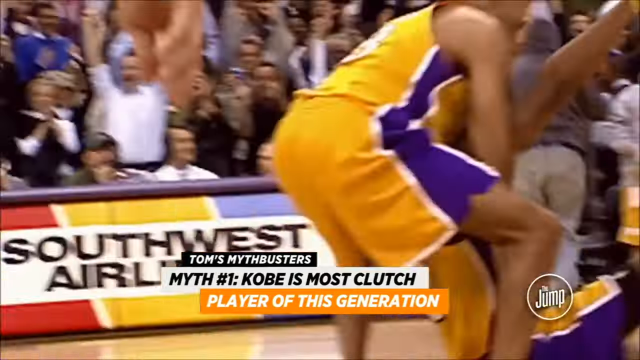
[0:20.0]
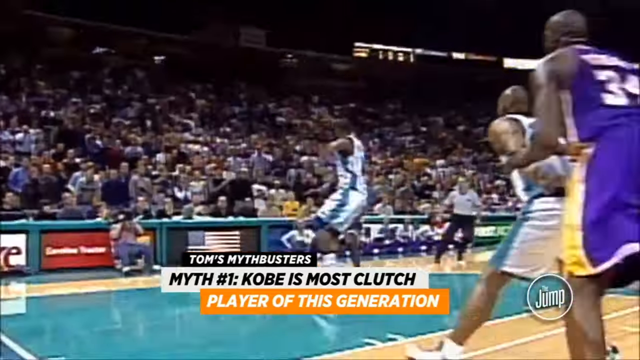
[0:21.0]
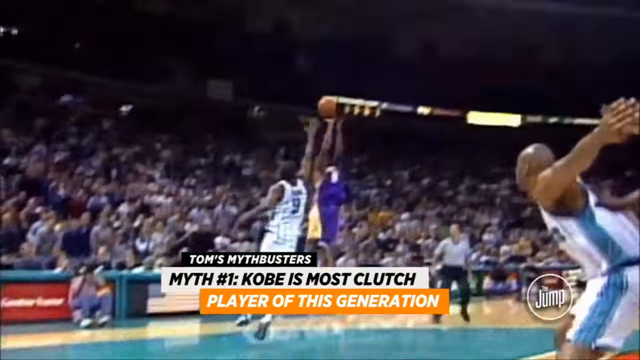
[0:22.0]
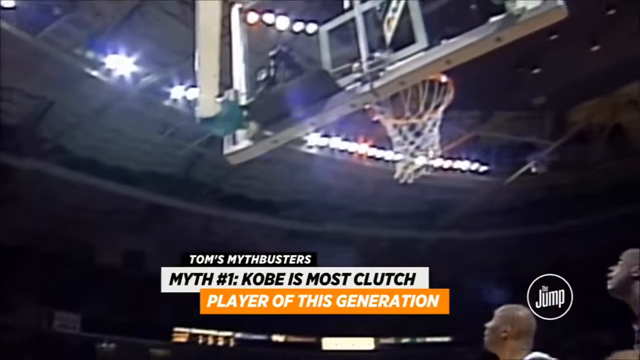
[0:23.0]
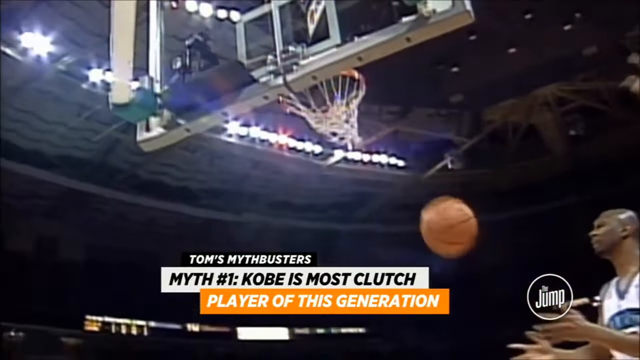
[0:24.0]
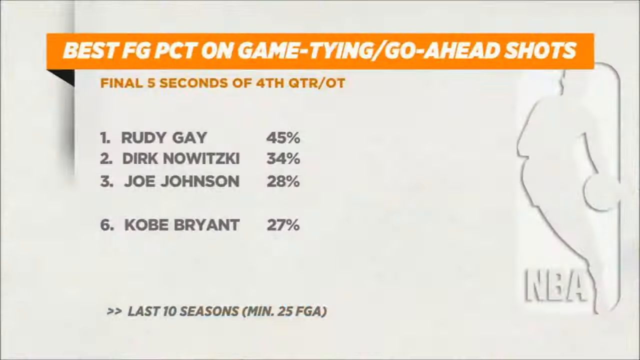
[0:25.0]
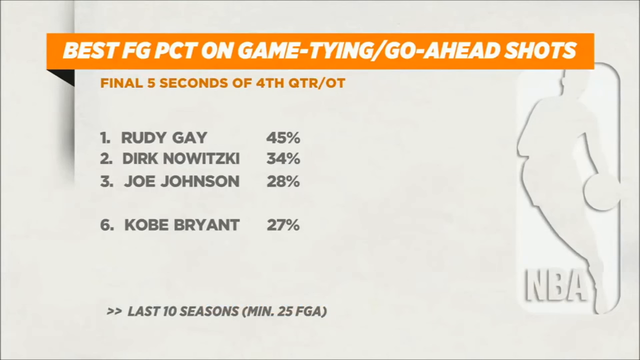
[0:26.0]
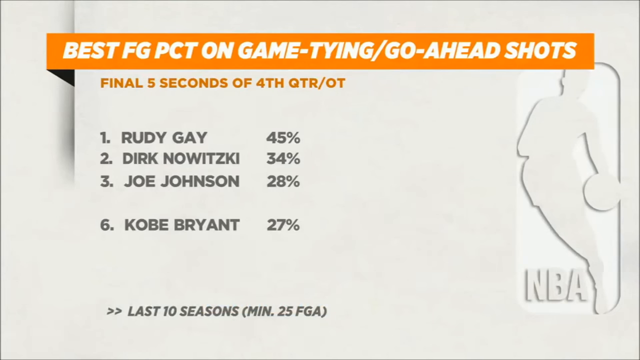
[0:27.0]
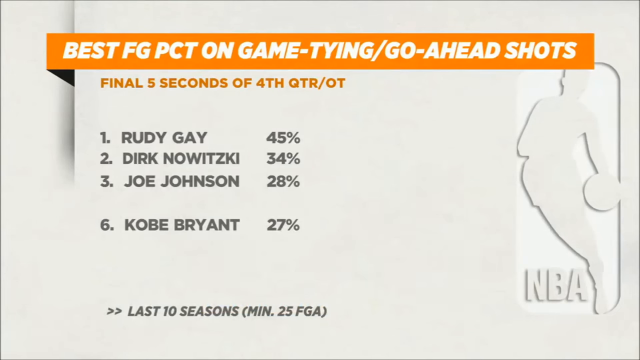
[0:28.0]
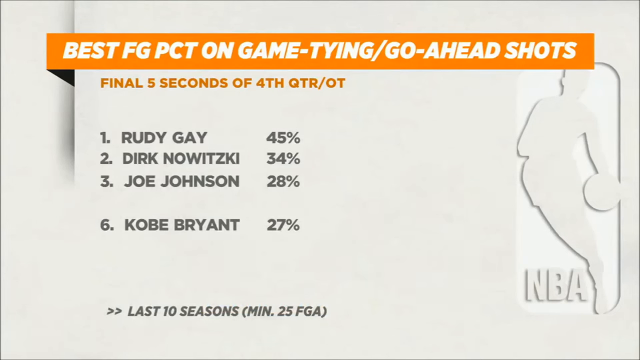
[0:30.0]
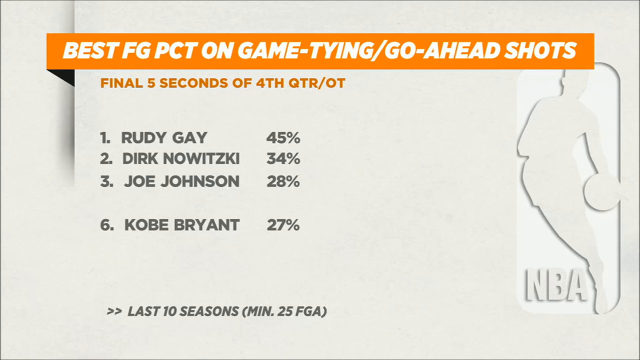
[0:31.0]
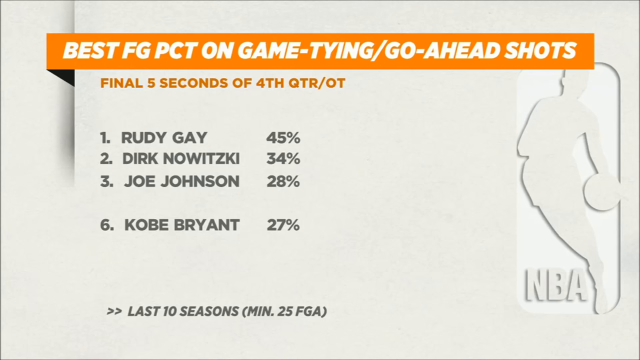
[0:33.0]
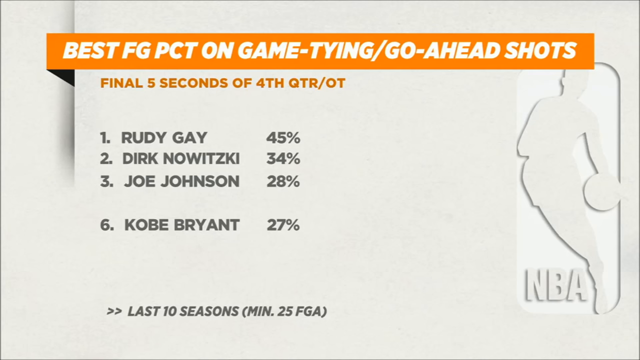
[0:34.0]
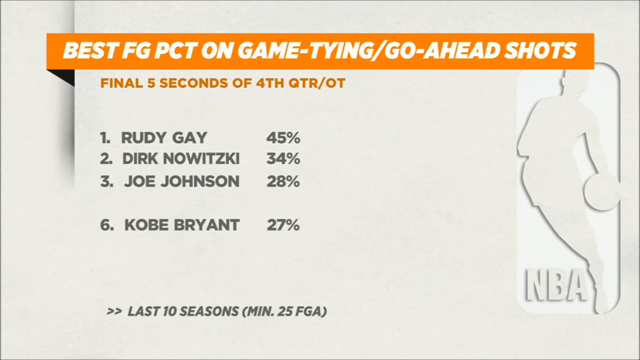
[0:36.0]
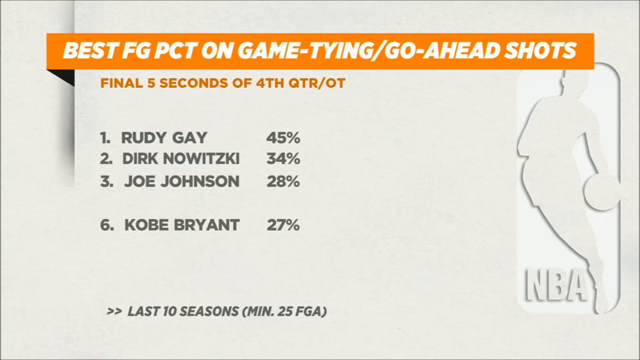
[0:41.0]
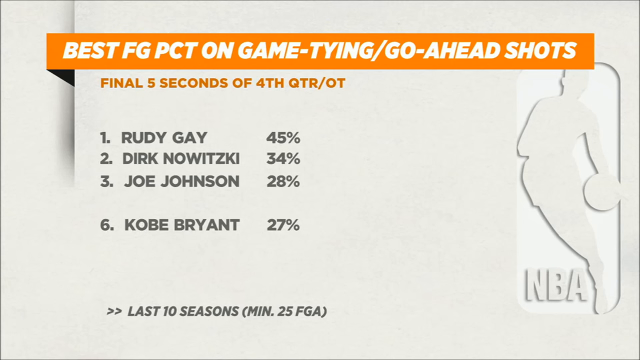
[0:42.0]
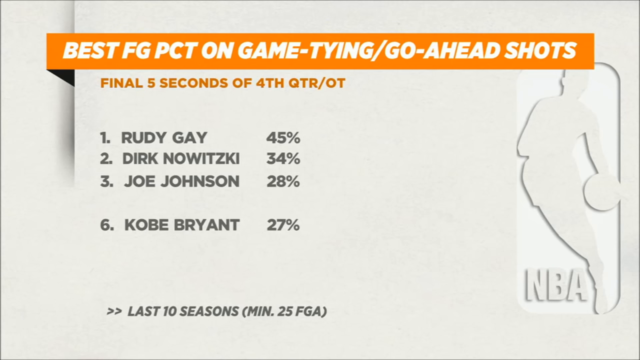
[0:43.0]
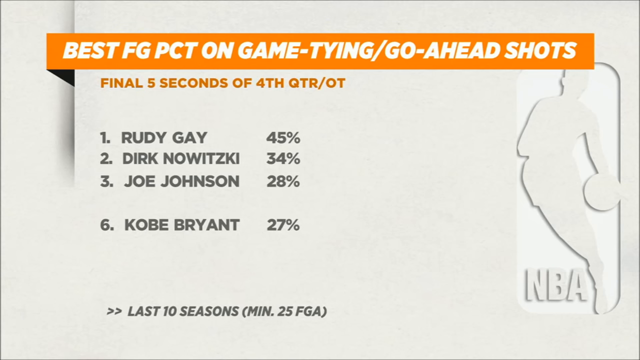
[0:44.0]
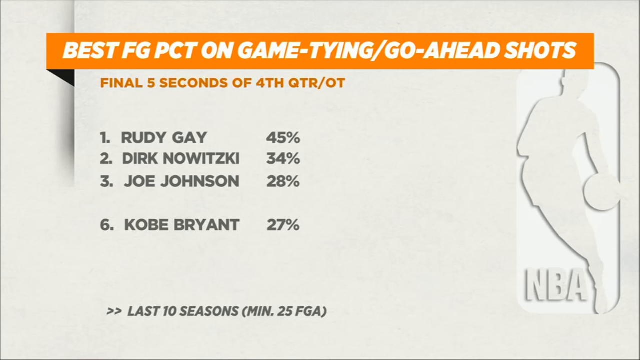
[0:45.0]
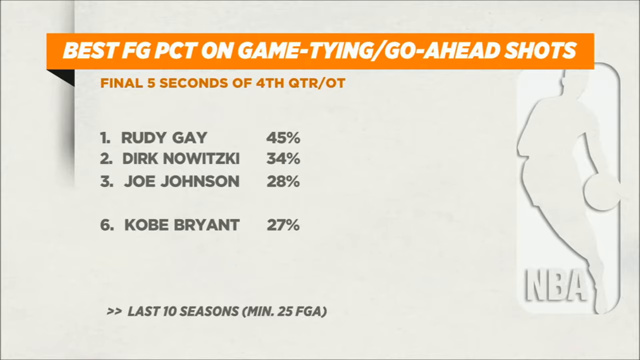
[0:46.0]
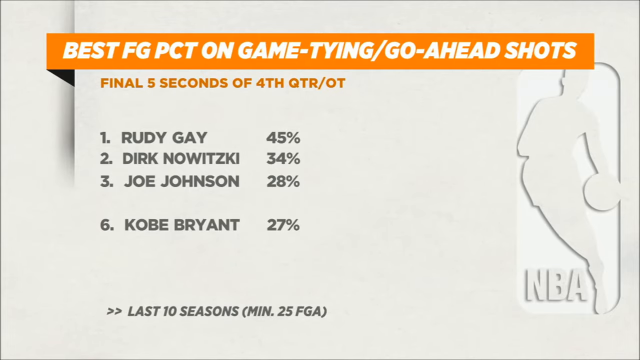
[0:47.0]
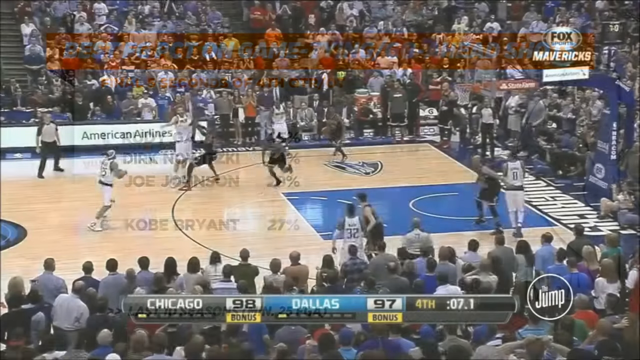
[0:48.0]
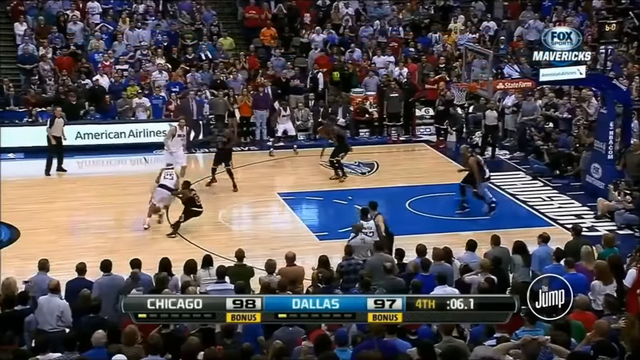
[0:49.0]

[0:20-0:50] He appears to be picking someone up, bent over a little, with the other player between his legs sitting on his butt. Fans celebrate in the stands; a man in the second row with rolled-up white sleeves has his arms up in the air, and people sit in two or three rows. In front of them is a Southwest Airlines ad: a white block with black text and yellow, red and blue vertical stripes. He bear hugs the player and picks him up to celebrate. Kobe then does a fadeaway, jumping back and fading away, and it swishes while number nine on the other team puts a hand up. A shot from what looks like a camera underneath the basket shows the net go up and curve as the ball goes through. Next comes a stat graphic with a white background and a WNBA logo that is not colored in, a silhouette holding the ball in the left hand. An orange banner at the top has white italicized text beginning "best FG percentage on game". The list shows one through three and then six, Kobe Bryant at 27%. At the bottom there is a double arrow and text reading "last 10 seasons with a minimum of 25". The banner on the left side has a black bar or triangle underneath it that makes it look 3D. Then Chicago and Dallas play each other, with Chicago winning 98-97 and six seconds left. Number 25 looks like he is about to dribble in, then passes out to Dirk Nowitzki, who goes up and takes a shot at the three-point line.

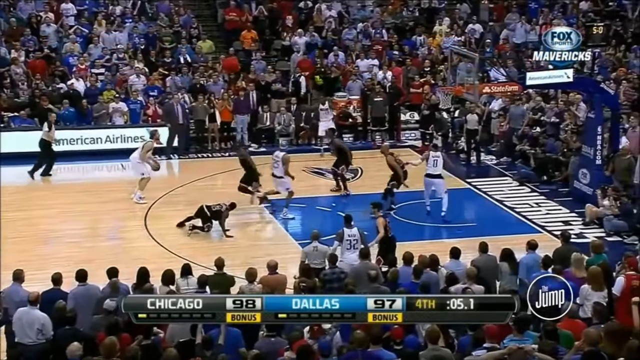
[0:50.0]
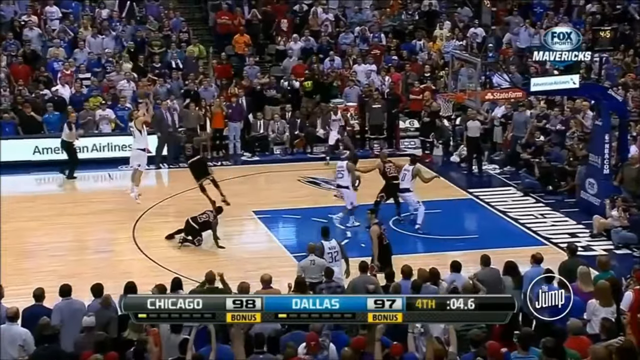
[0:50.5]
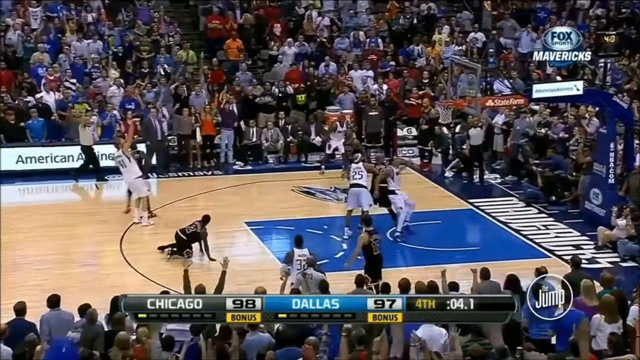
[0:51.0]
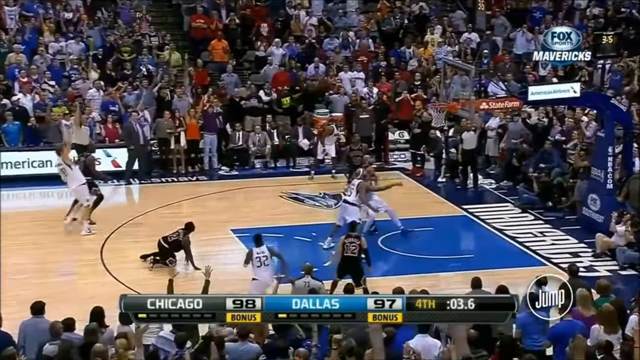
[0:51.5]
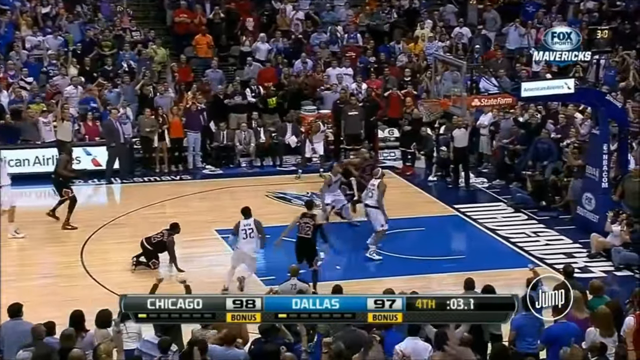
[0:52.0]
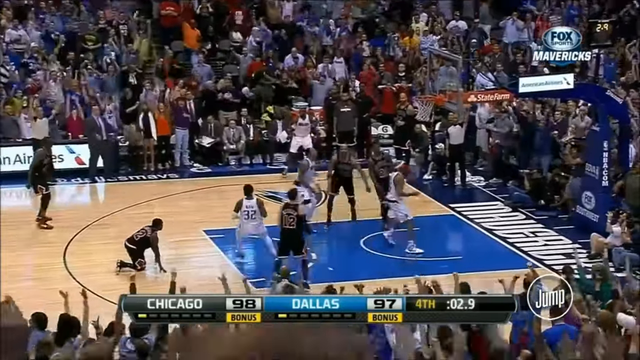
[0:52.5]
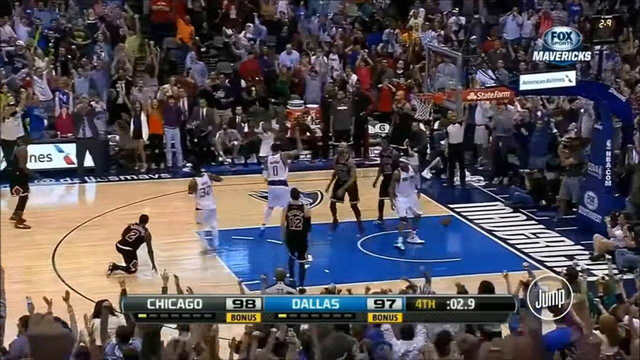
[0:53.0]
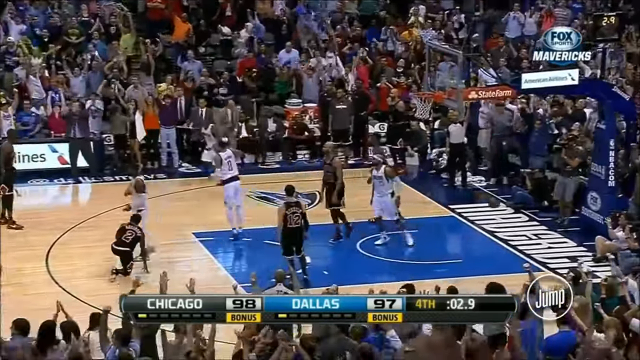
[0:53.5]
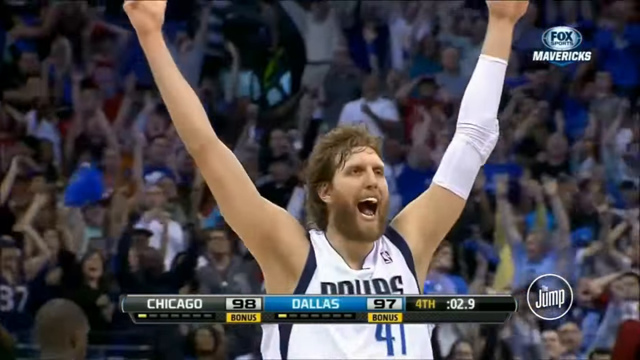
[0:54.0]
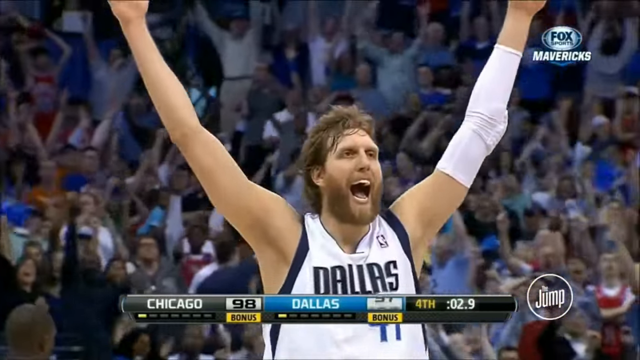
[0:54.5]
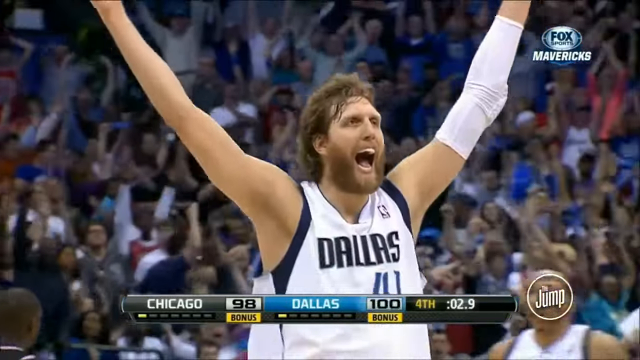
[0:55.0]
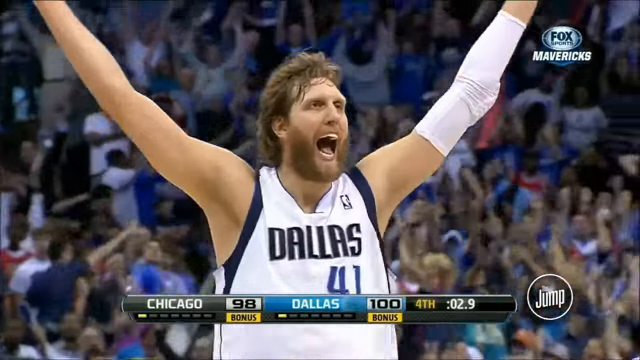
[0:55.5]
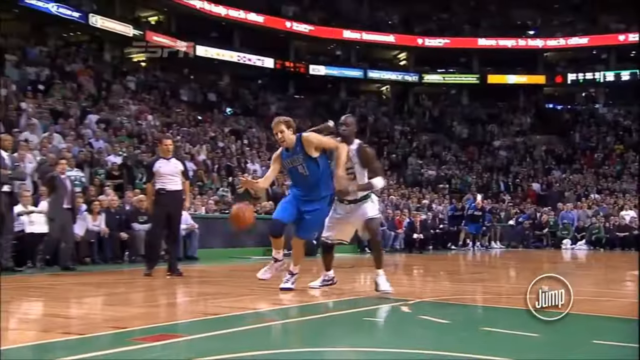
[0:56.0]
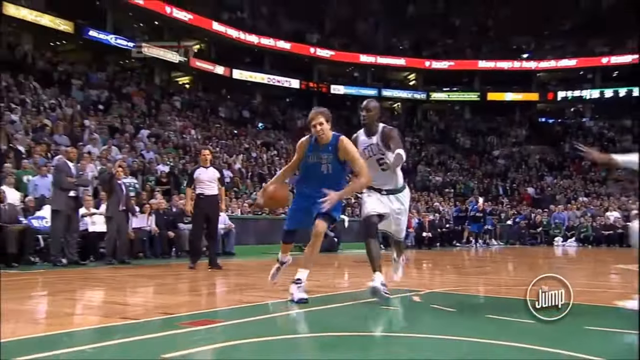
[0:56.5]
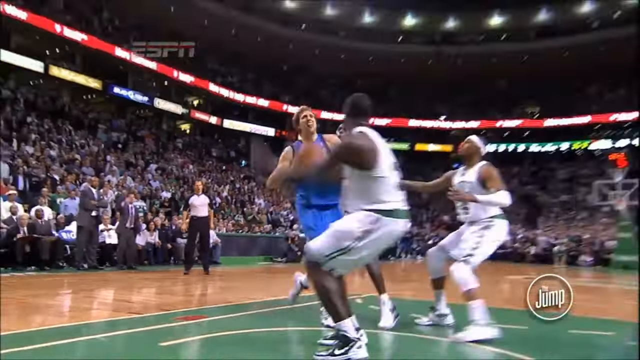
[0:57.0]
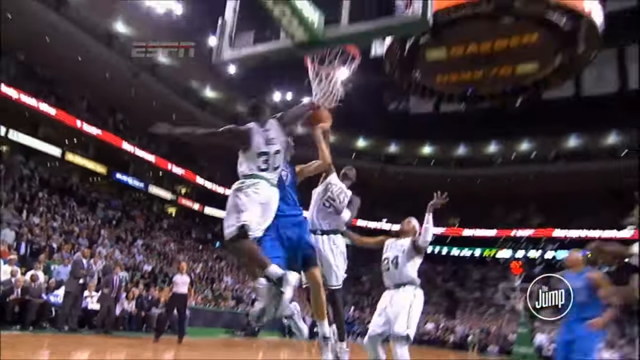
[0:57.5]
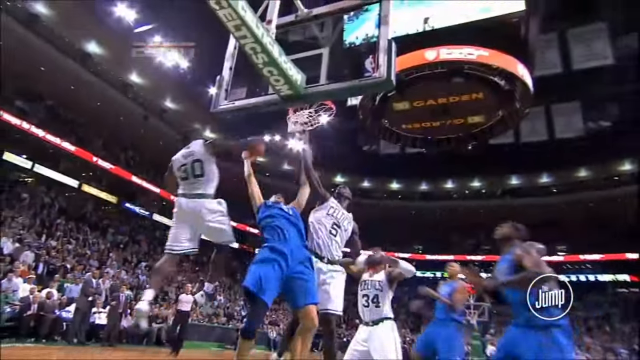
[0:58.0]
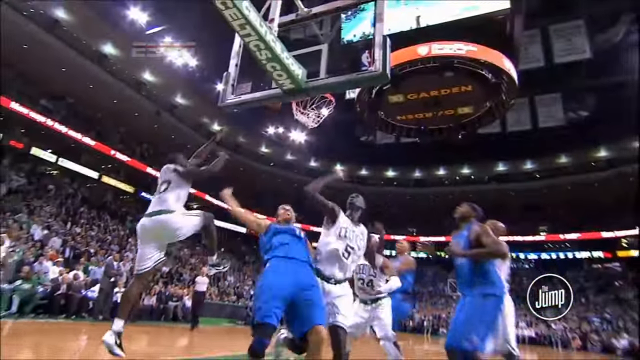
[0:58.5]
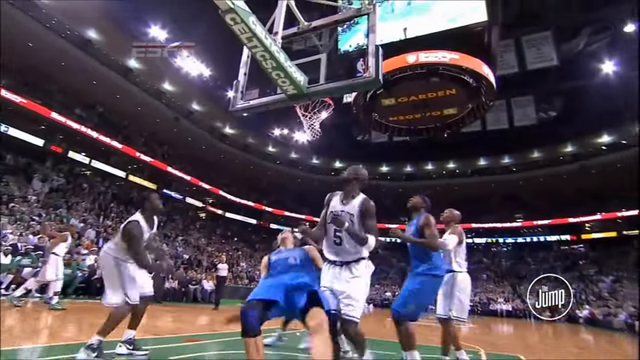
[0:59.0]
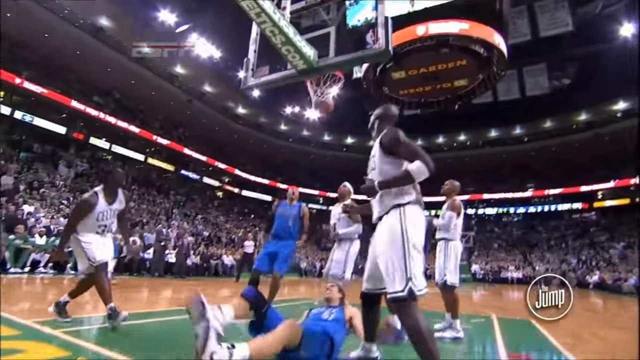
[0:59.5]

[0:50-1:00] "Fox Sports Mavericks" branding appears, apparently indicating a Mavericks television broadcast. "Mavericks" is written in white sideways on the floor in the out-of-bounds area to the right of the hoop. The paint is a medium blue rectangle, and something that looks like a letter C is under the hoop. Dirk Nowitzki rises high off both feet for the shot, his arms tilted forward as he releases it. A referee on the sideline in front of an American Airlines sign has his right arm up with a whistle, then puts both hands up. Dirk Nowitzki is ecstatic after making the shot, his arms in a Y formation, and he wears a white elbow sleeve on his left arm. In another shot Dirk Nowitzki wears blue, apparently as the away team, and carries the ball into the blue paint between two defenders. He jumps up, they hit him mid-shot, and he makes the bank shot.